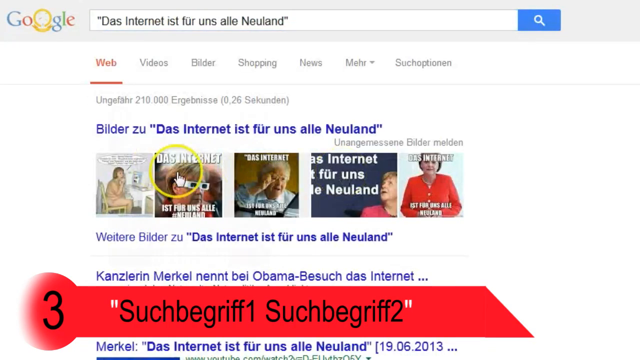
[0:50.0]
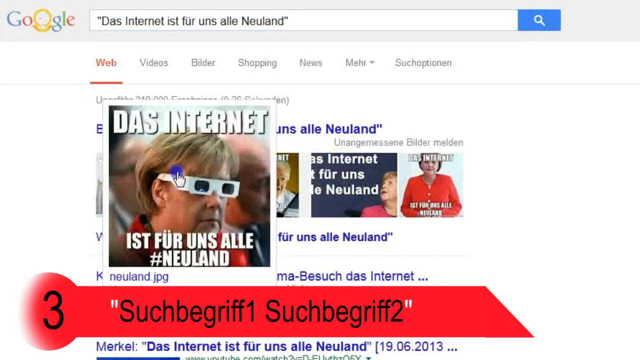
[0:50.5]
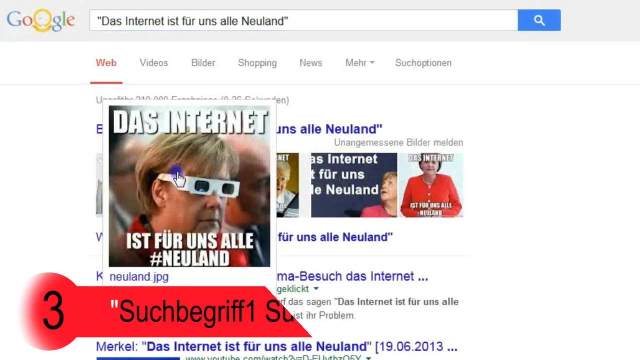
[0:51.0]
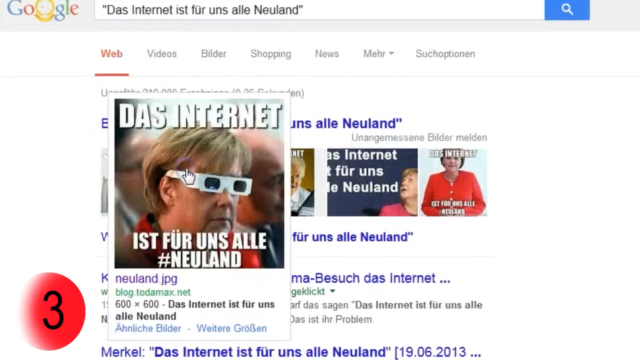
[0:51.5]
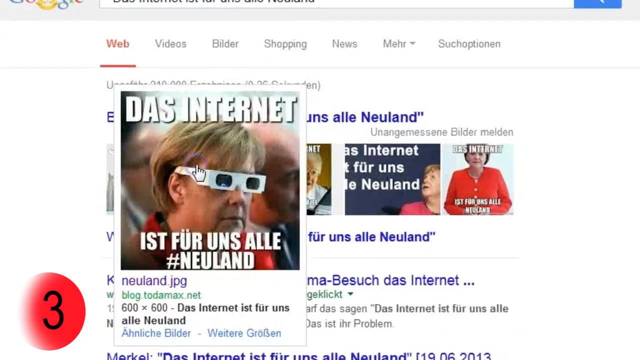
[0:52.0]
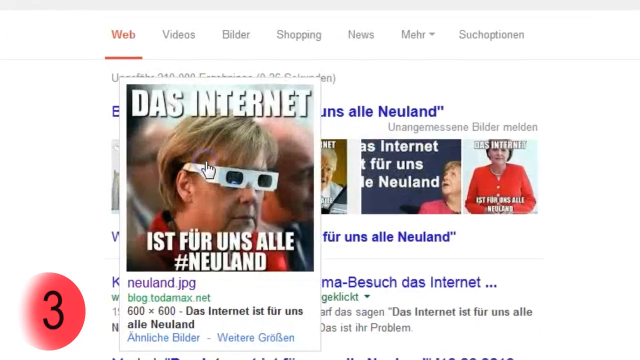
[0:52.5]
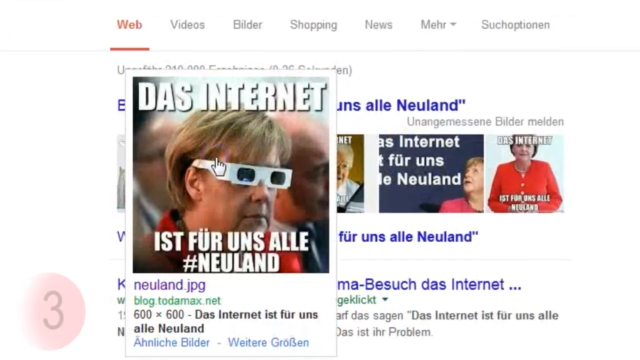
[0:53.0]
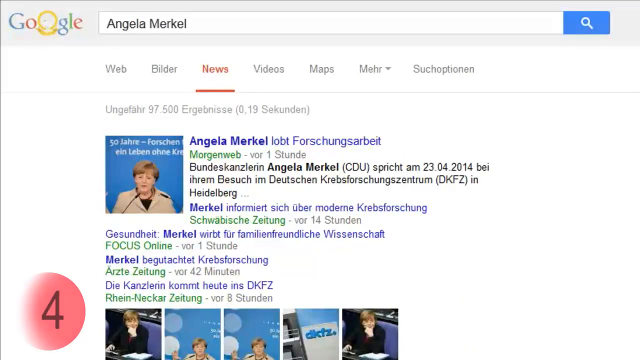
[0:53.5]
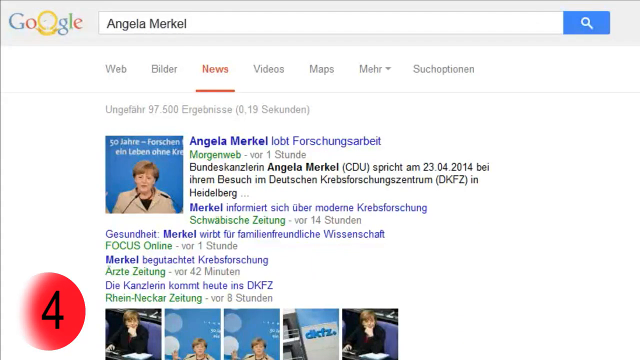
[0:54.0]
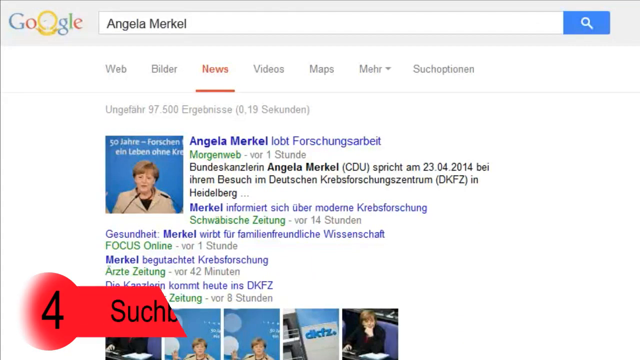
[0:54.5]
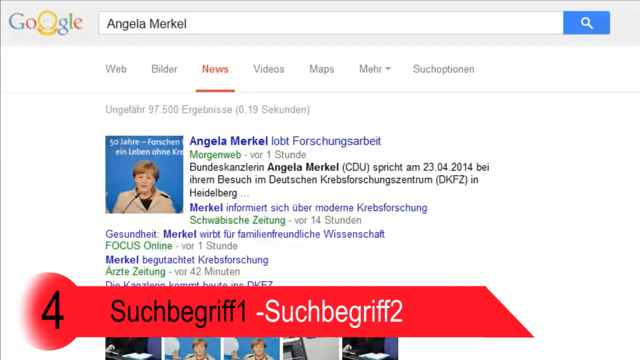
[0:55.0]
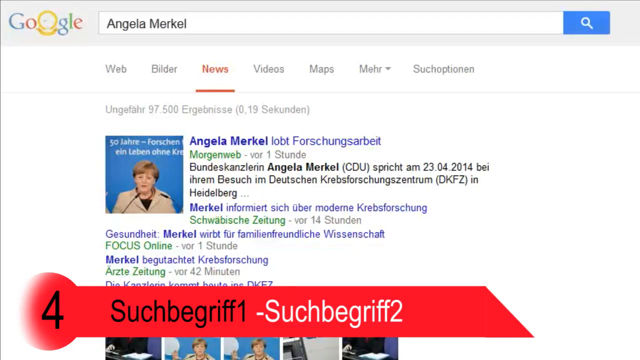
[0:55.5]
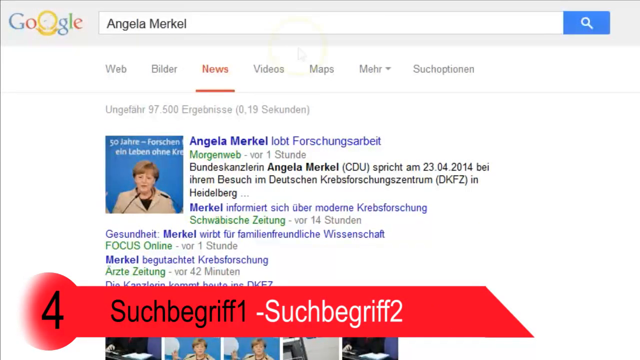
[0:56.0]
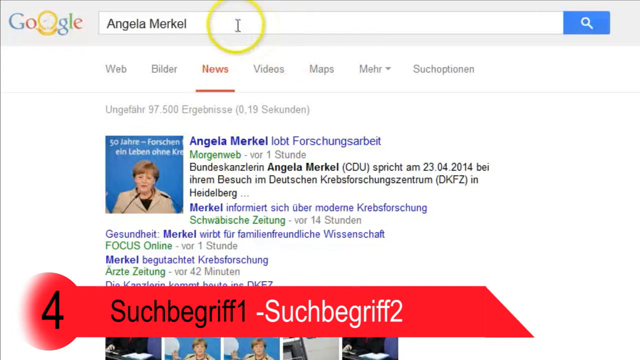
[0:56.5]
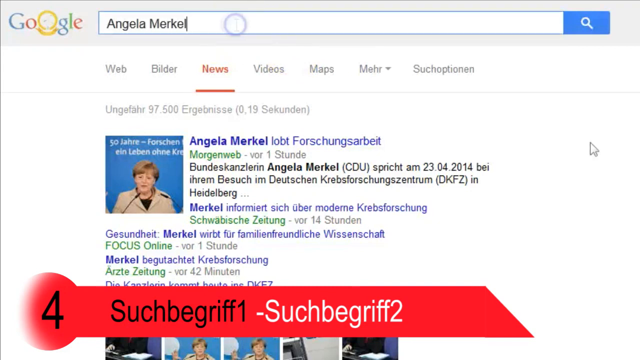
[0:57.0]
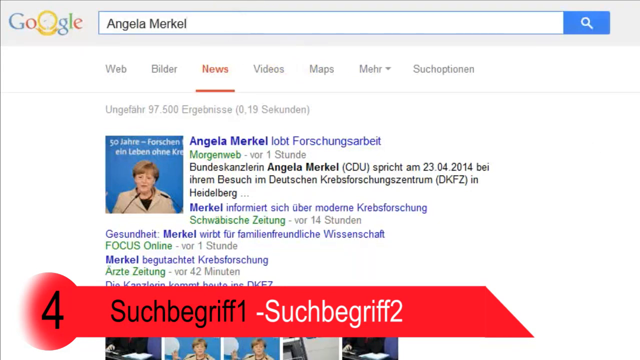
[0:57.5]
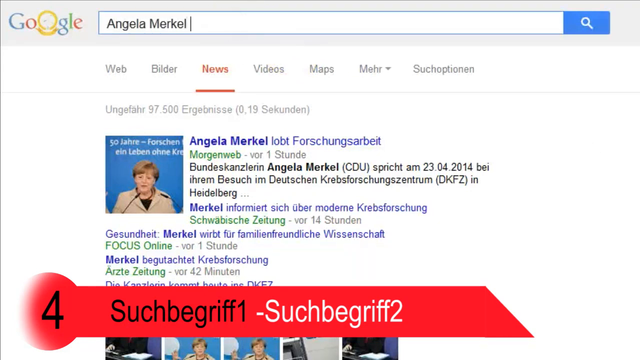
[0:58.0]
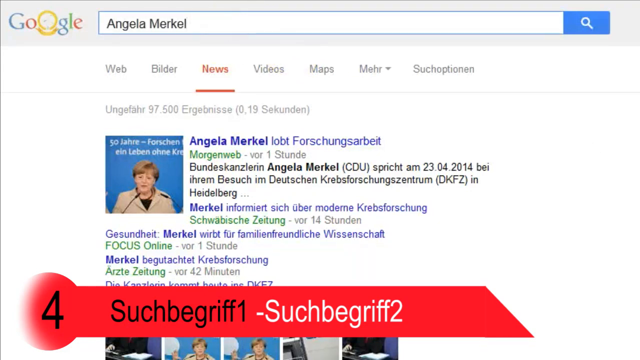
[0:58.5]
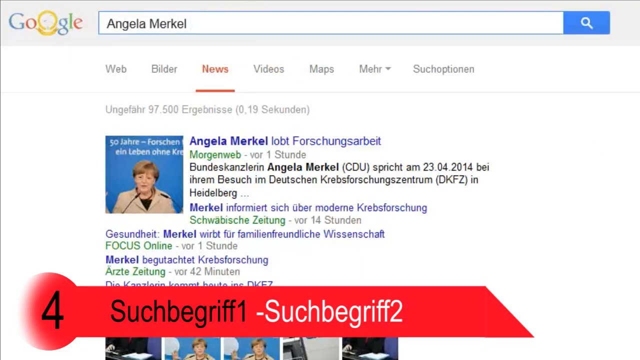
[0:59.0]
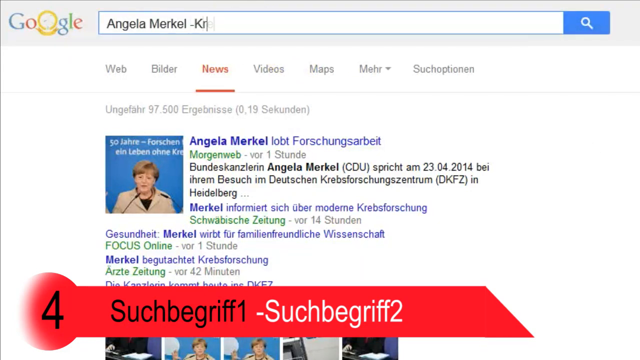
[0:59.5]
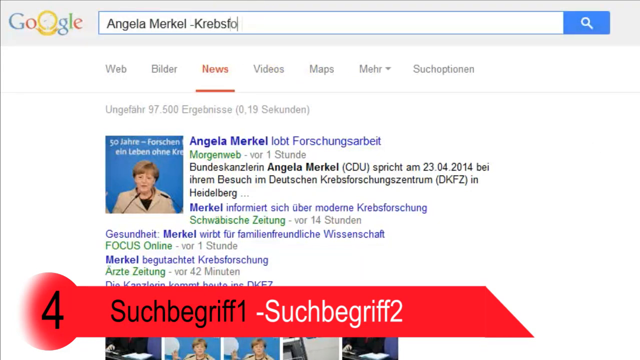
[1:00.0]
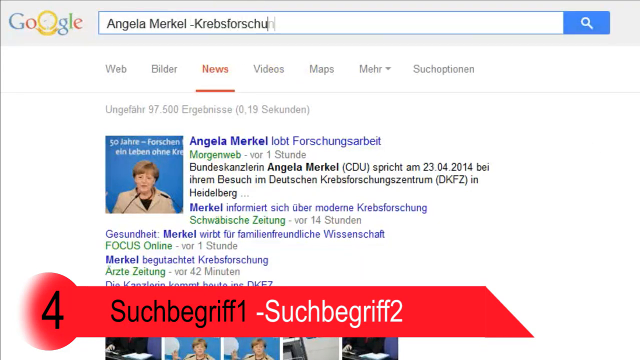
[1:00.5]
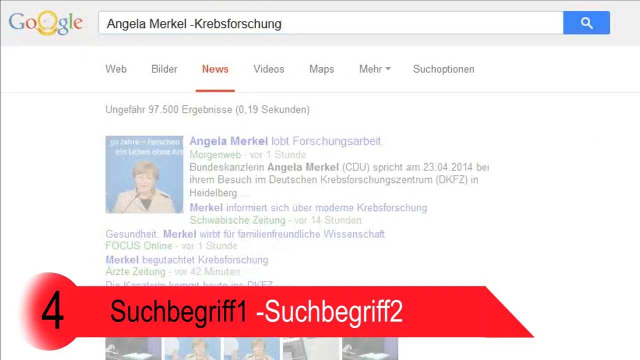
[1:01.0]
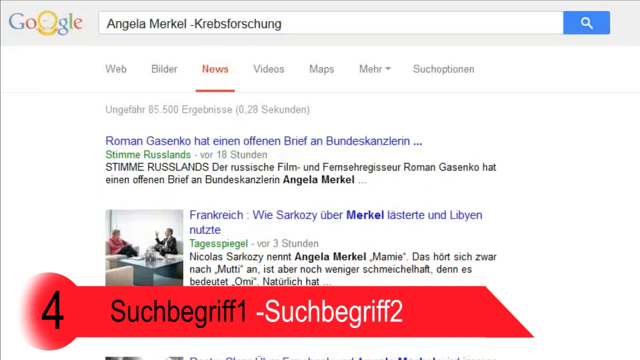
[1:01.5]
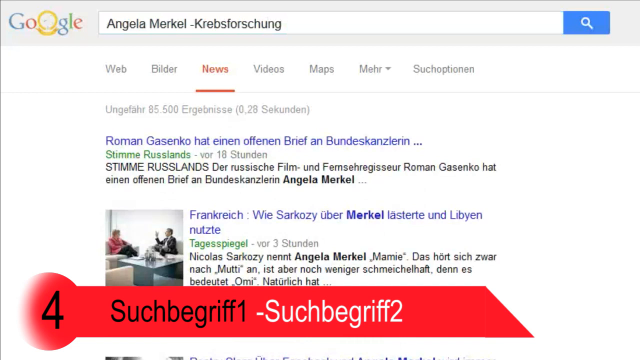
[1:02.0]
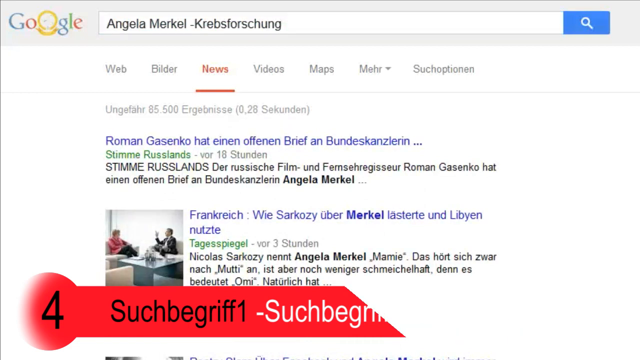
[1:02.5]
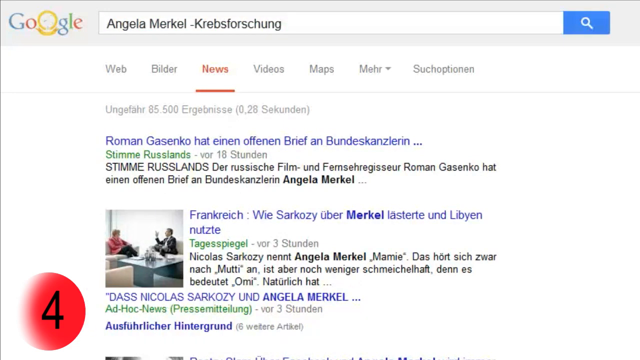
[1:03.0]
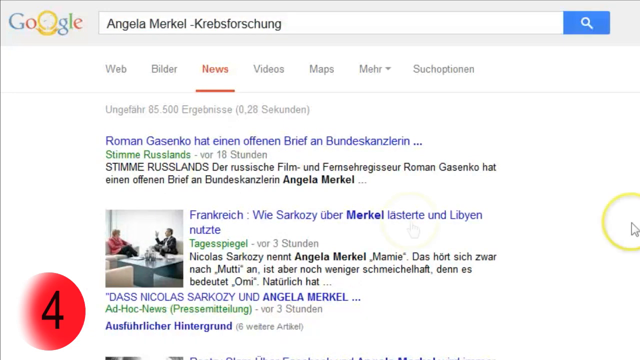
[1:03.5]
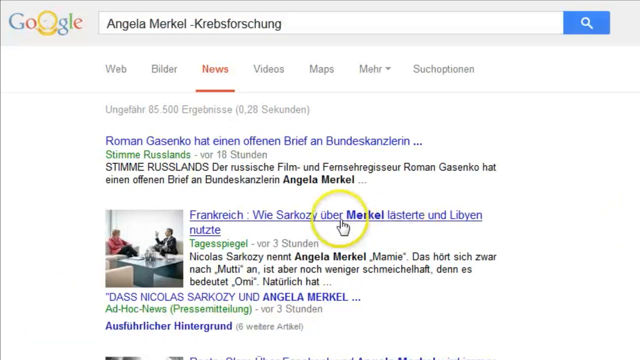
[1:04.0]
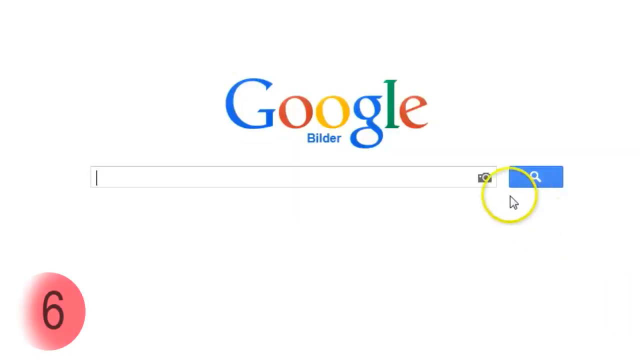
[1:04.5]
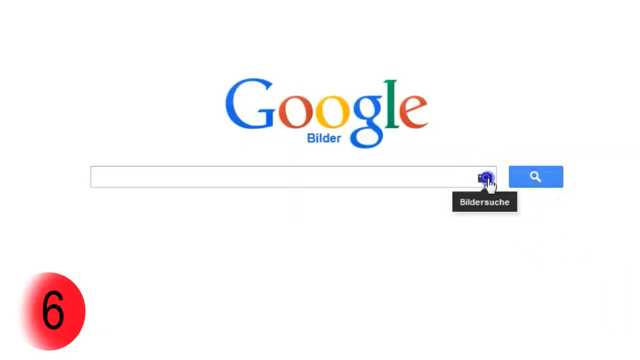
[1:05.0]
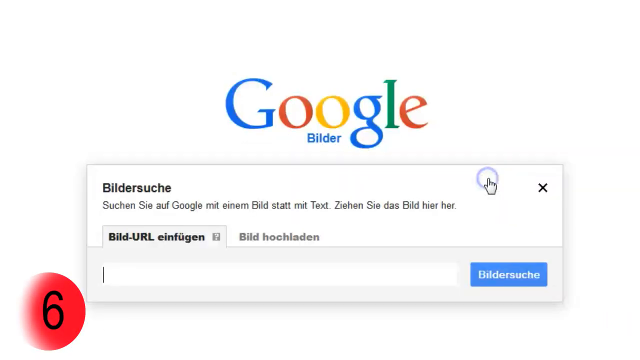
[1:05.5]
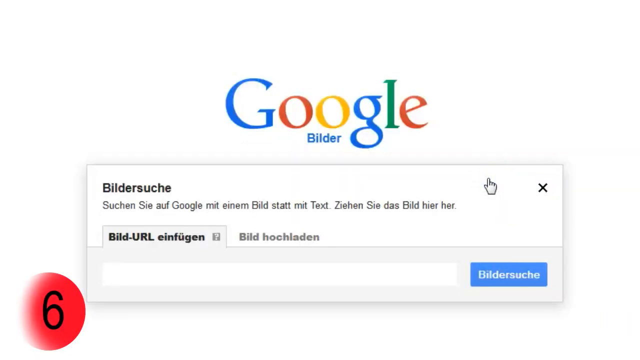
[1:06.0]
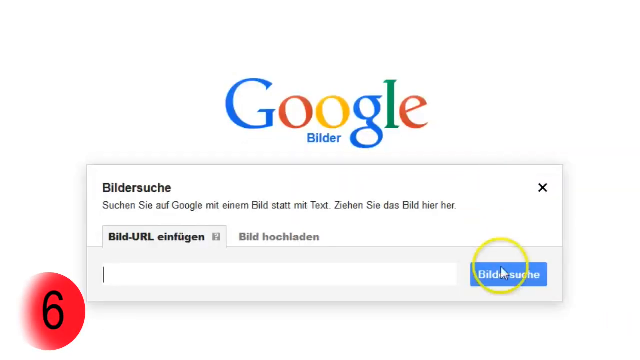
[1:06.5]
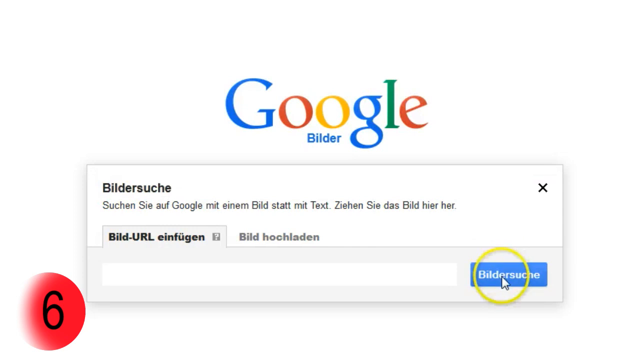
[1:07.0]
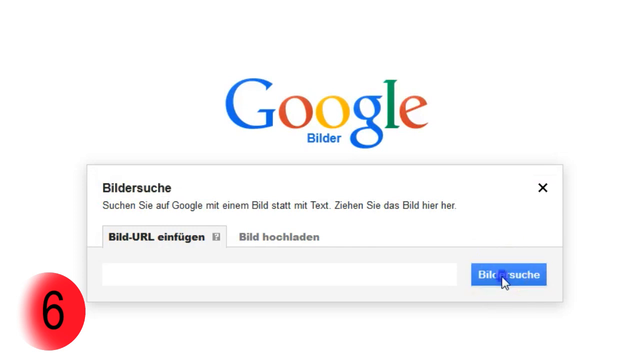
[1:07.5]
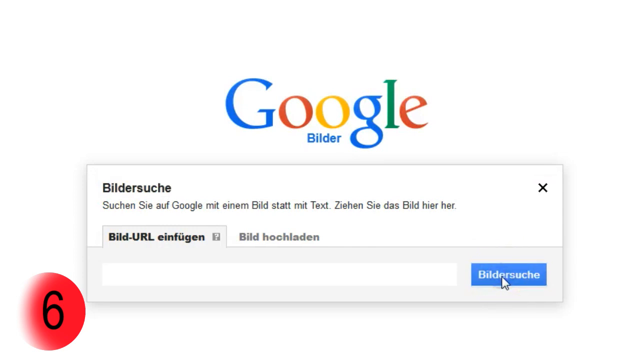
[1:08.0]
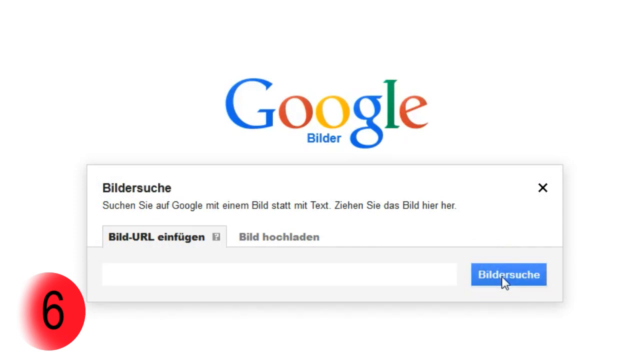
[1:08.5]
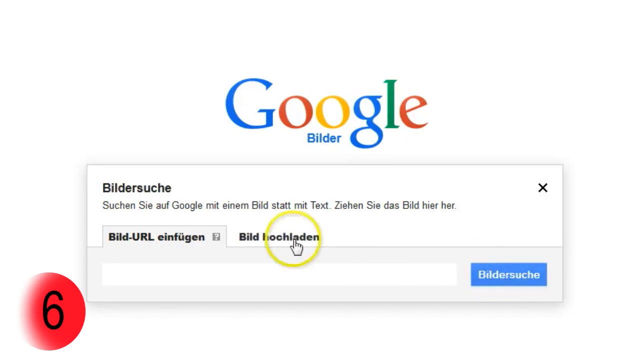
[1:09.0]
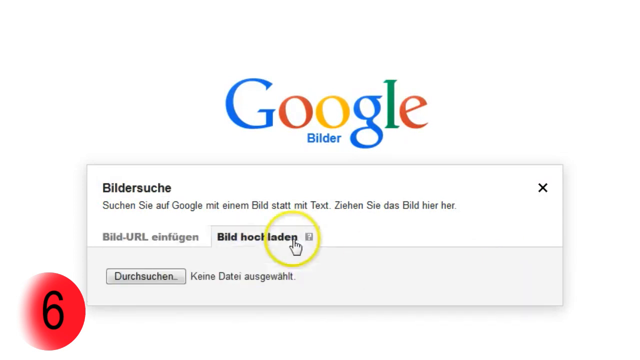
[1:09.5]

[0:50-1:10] The search bar on the Google home page contains German words including the word "Internet". The search results show many meme images in the first result, followed by more of them. At the bottom of the screen is the number three on top of a red banner with two words in German, labeled one and two. The person hovers over one of the meme images and zooms in on it. It shows a person with short blonde hair wearing 3D glasses who appears somewhat aged, with German words, the word "Internet" and a hashtag. They then switch tabs, and the search bar of the Google page now says "Angela Merkel". Many search results appear, the first being an image of the person and the website. The number four appears at the bottom of the screen on a red banner with two German words labeled one and two. They click in the search bar after the name, add a dash and a word in German, press enter, and hover over the options before switching to another Google homepage tab and clicking on one of the options.